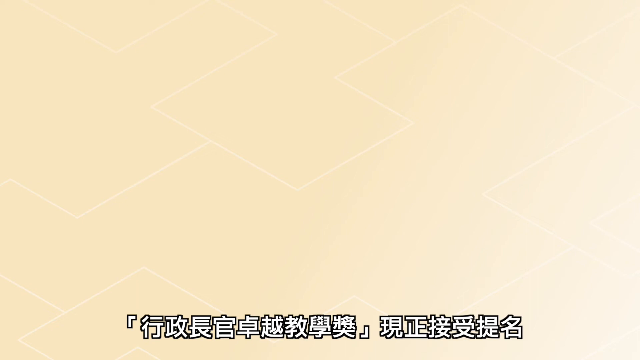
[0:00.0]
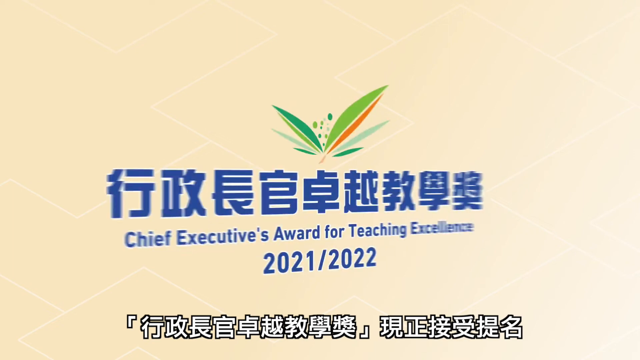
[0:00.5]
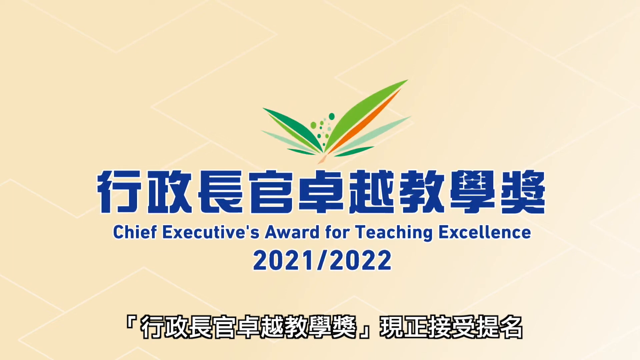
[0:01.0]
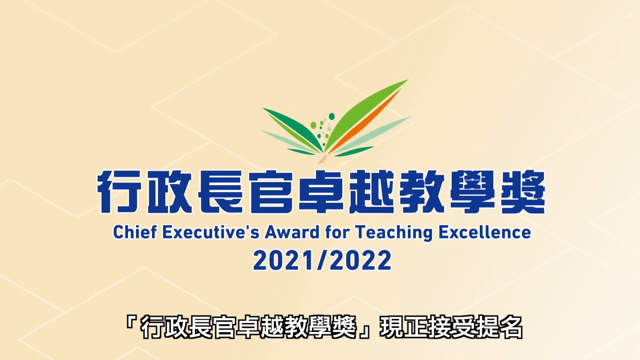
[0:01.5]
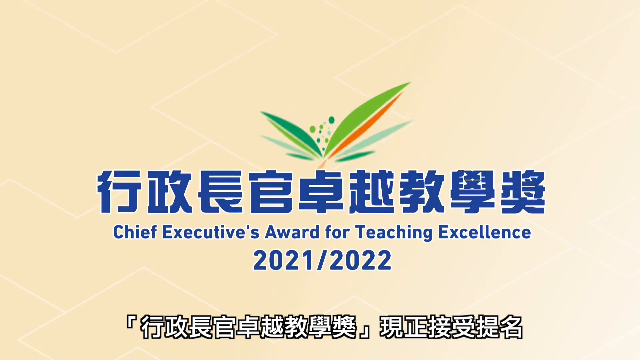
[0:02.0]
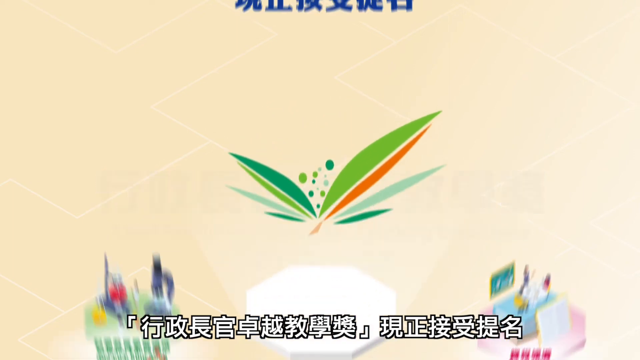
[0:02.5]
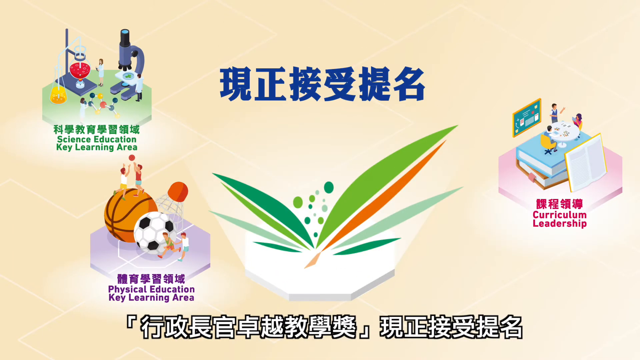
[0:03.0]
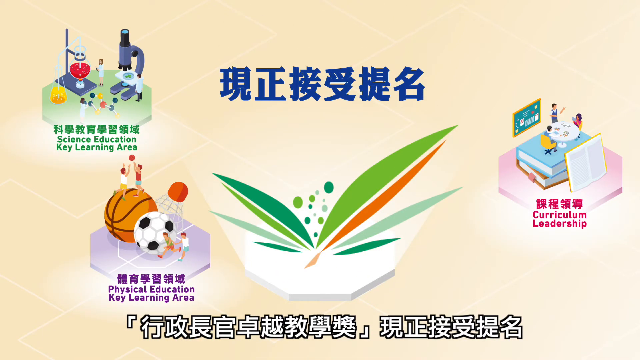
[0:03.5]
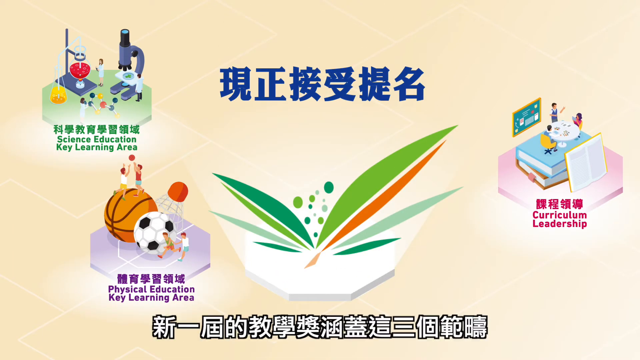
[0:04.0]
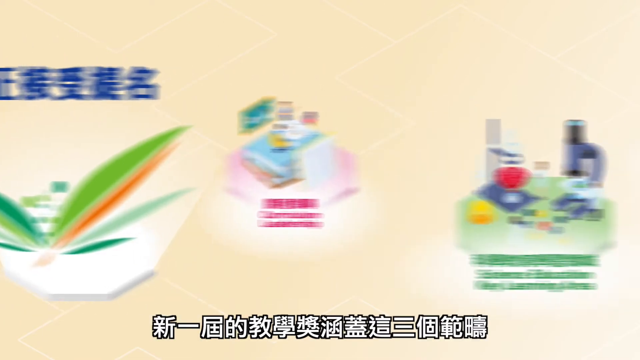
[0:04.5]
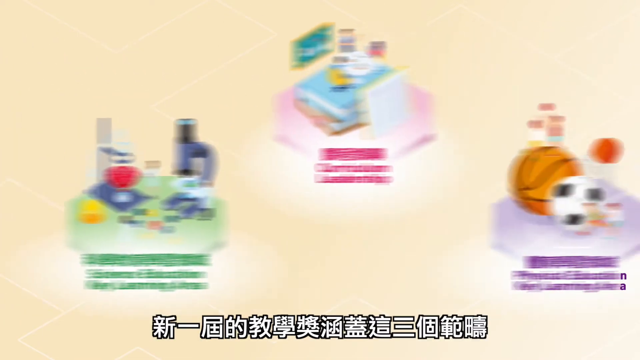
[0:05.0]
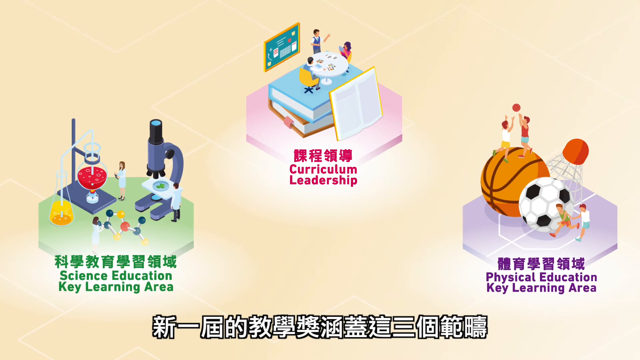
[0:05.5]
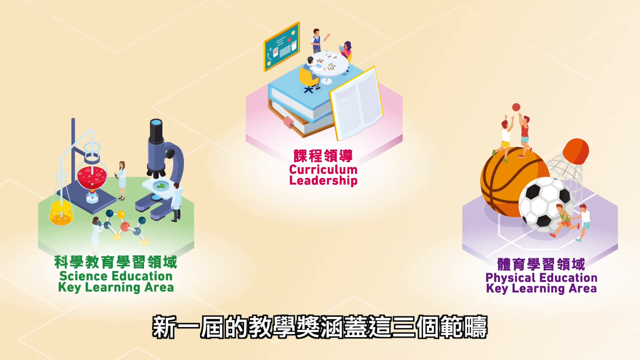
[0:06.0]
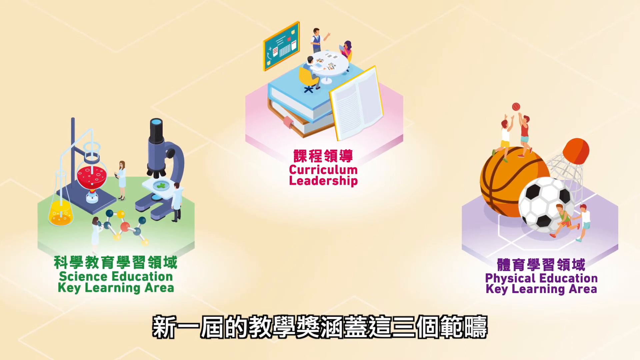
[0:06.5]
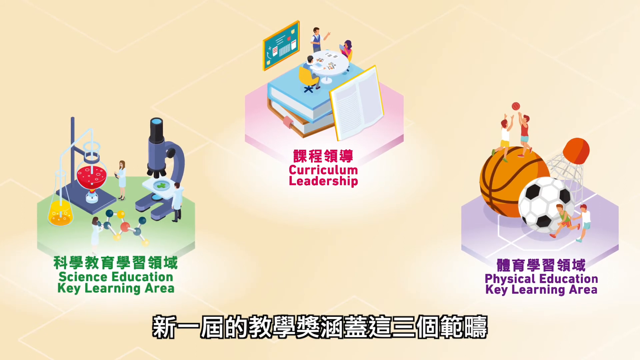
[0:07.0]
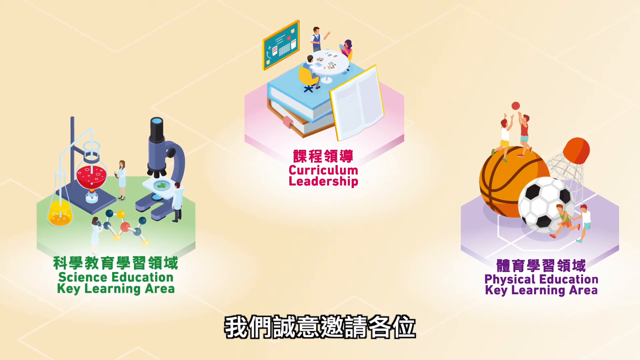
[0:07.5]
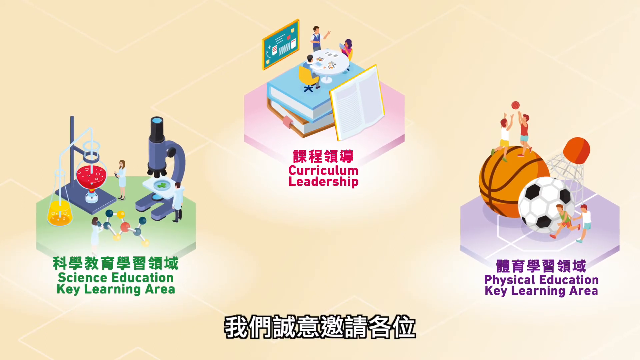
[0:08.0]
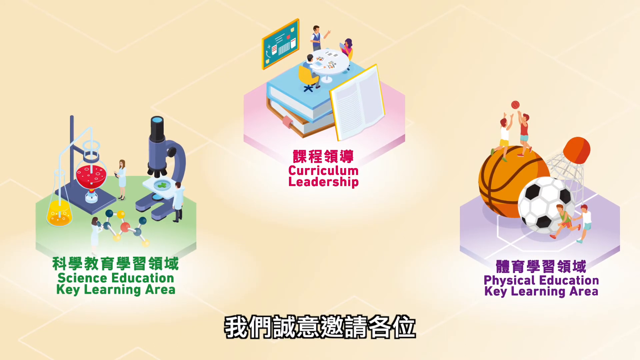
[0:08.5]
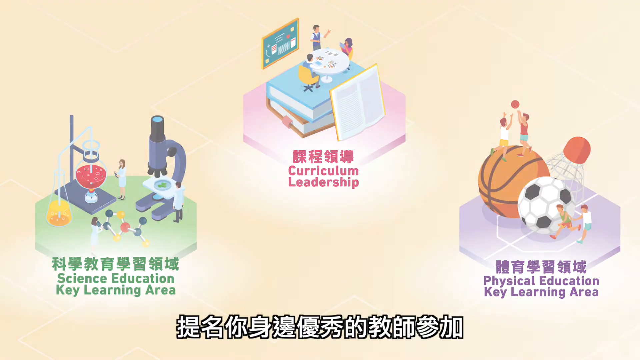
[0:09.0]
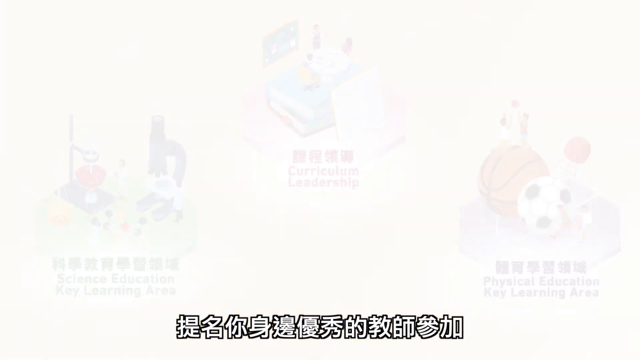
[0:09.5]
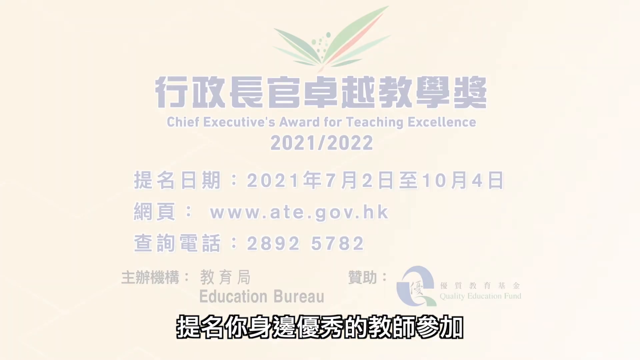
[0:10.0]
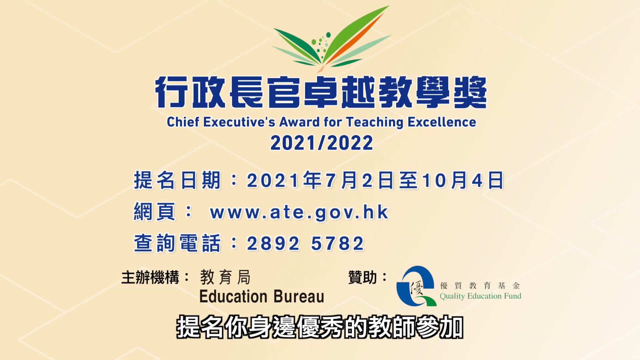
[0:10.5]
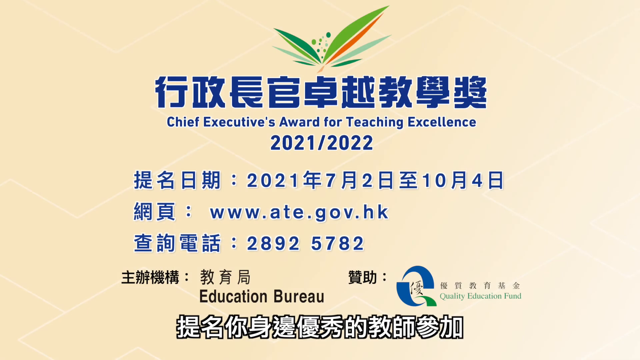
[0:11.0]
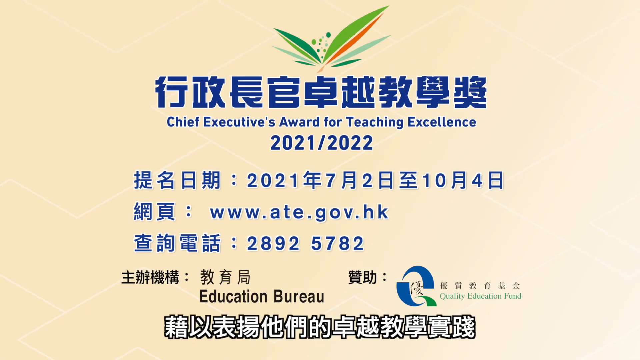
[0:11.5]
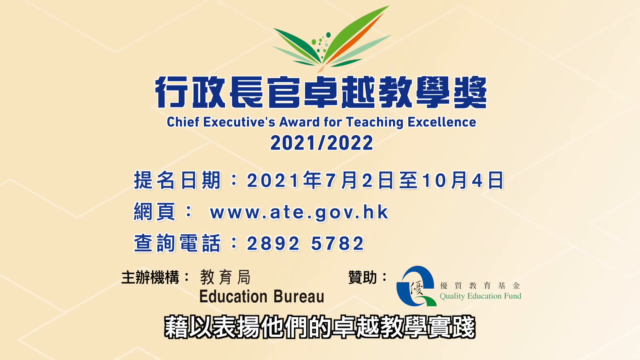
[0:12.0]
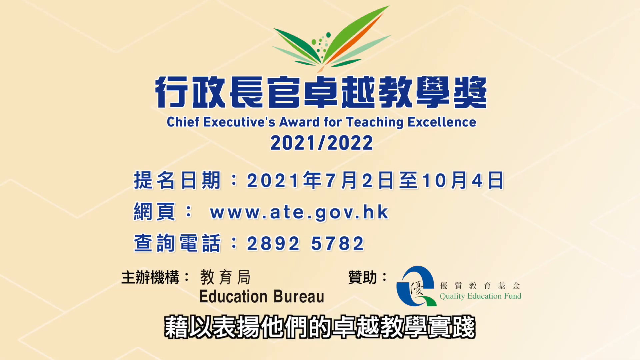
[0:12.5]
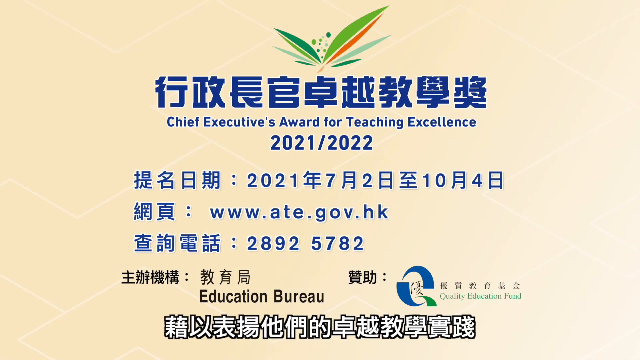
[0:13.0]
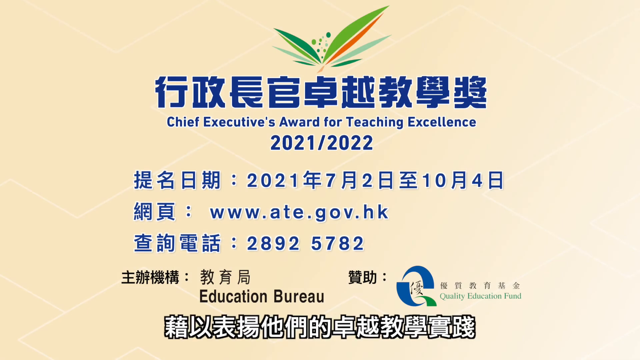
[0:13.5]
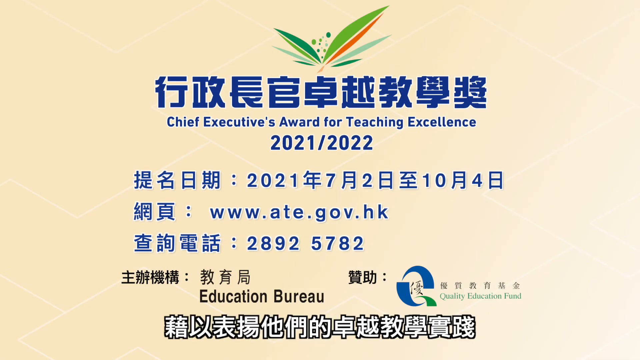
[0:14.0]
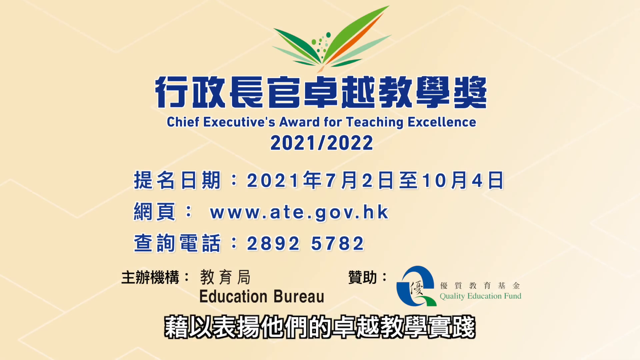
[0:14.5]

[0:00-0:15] The video presents an award for teaching excellence, with most of its text in Chinese and English subtitles. Three different tabs appear, reading "science education key learning area", "curriculum leadership" and "physical education key learning areas". The science education tab shows a microscope and a beaker, the curriculum leadership tab shows books and talking, and the physical education tab shows sports being played with nets and balls. The video indicates that this is from Hong Kong and is from the Education Bureau, for teaching excellence.